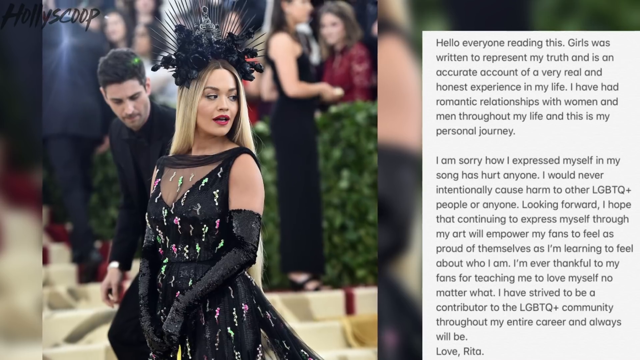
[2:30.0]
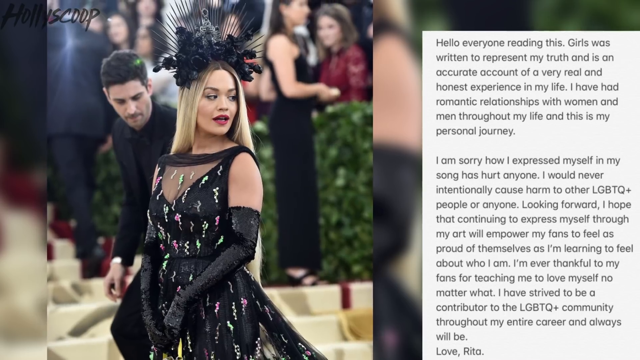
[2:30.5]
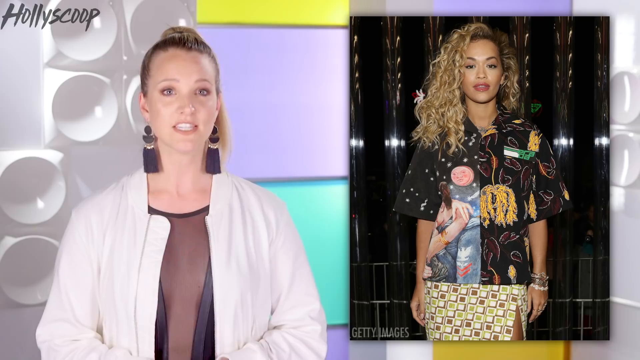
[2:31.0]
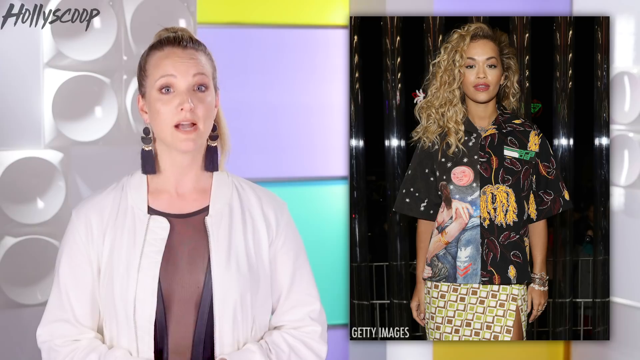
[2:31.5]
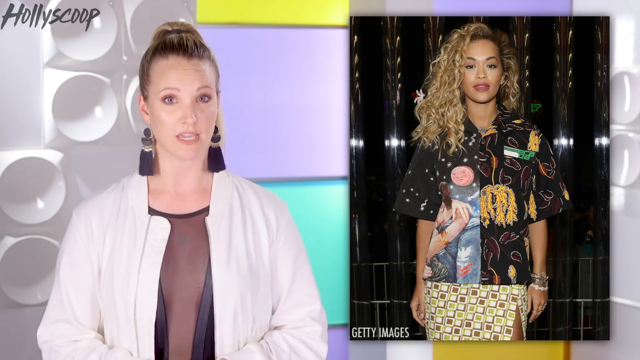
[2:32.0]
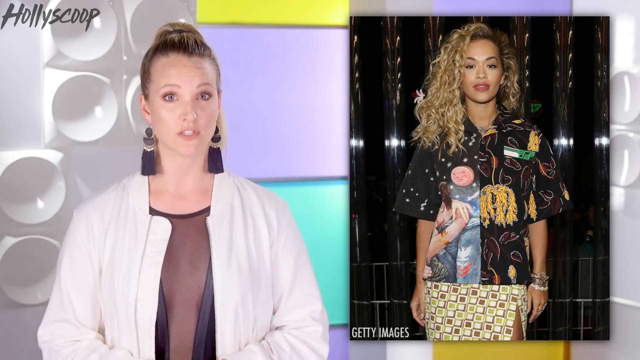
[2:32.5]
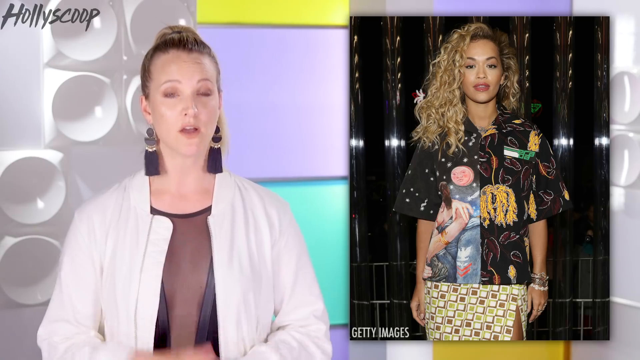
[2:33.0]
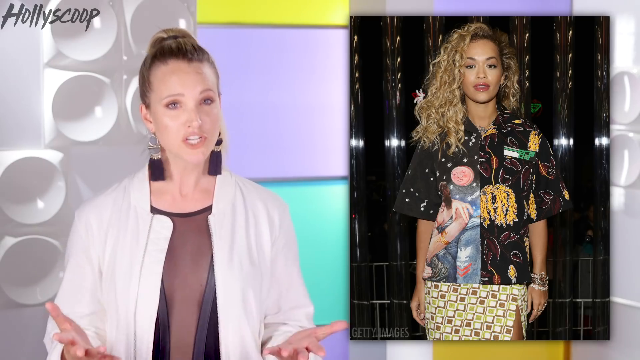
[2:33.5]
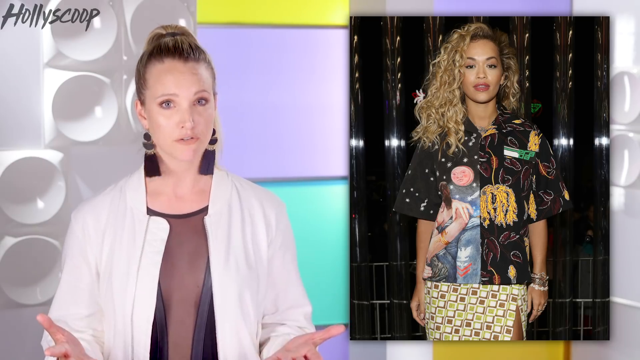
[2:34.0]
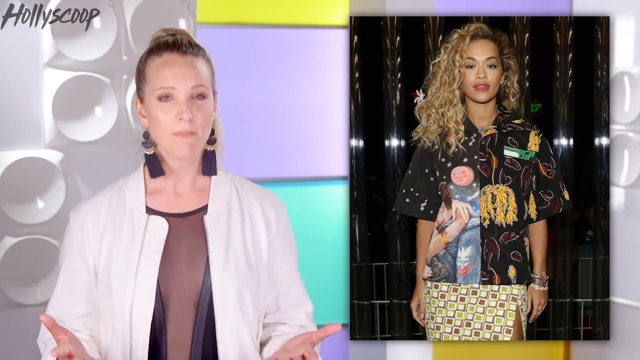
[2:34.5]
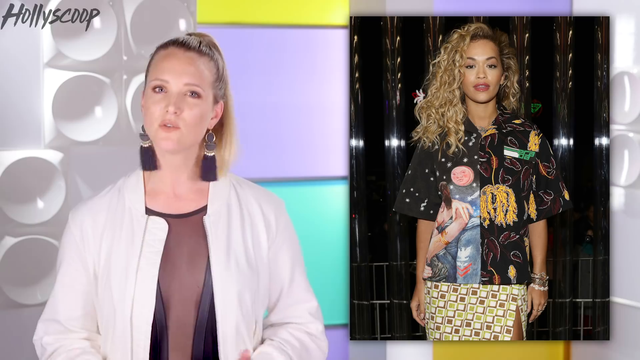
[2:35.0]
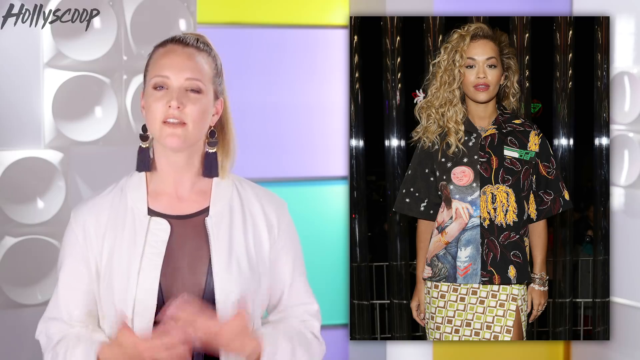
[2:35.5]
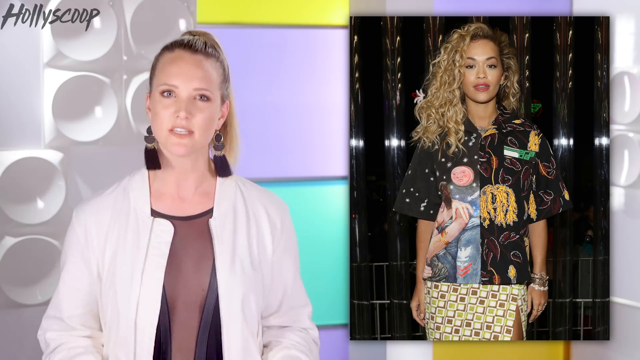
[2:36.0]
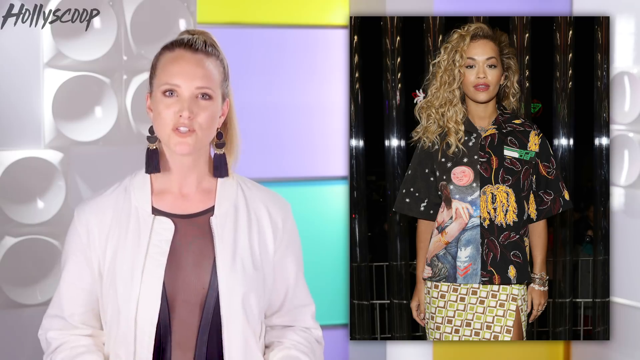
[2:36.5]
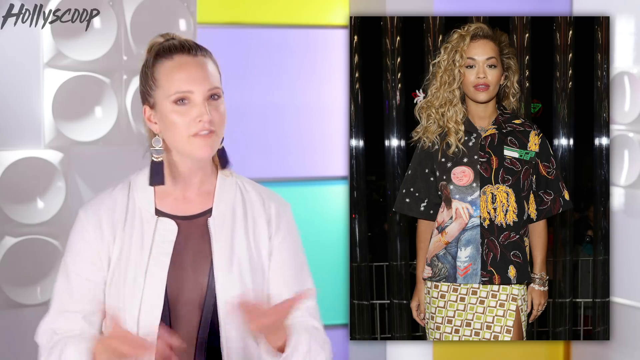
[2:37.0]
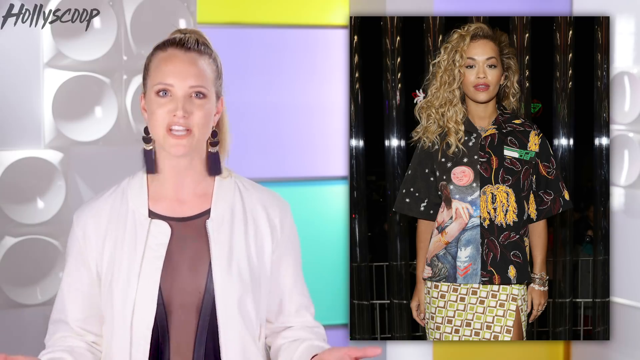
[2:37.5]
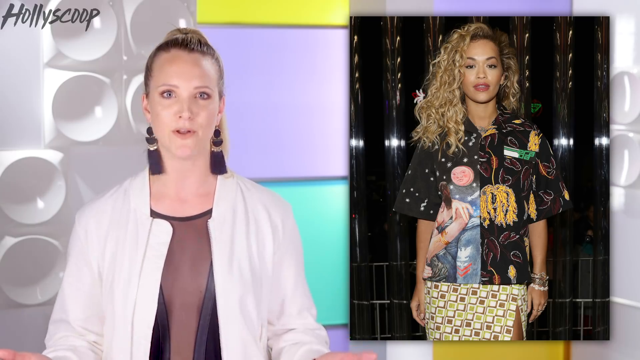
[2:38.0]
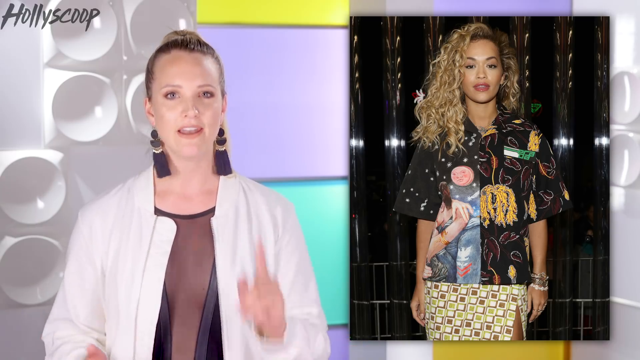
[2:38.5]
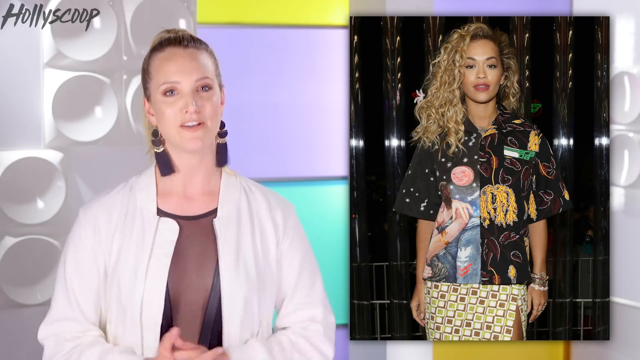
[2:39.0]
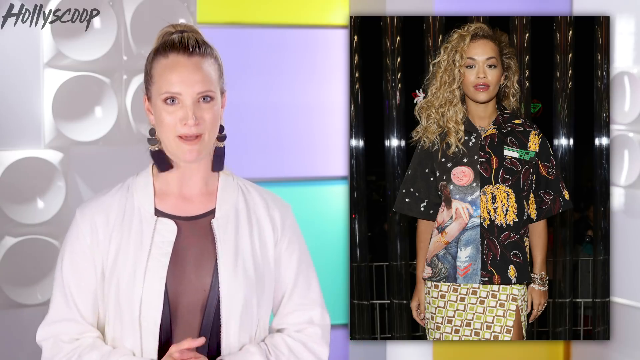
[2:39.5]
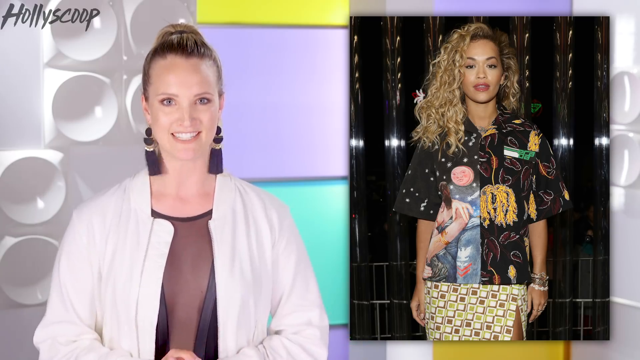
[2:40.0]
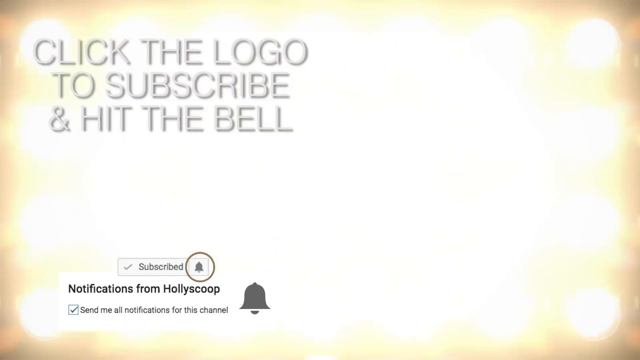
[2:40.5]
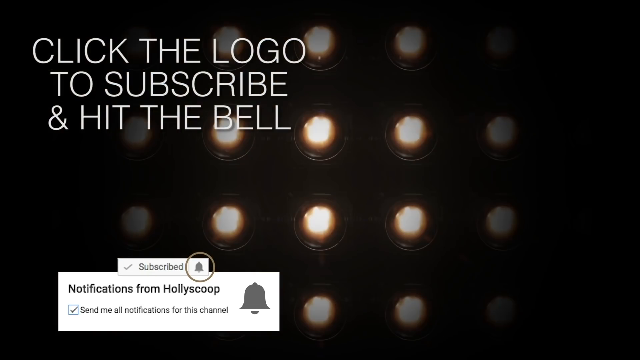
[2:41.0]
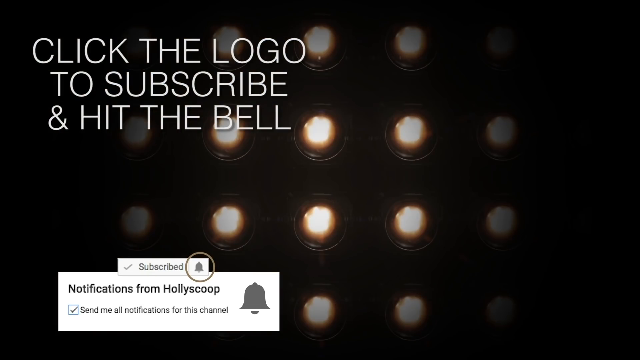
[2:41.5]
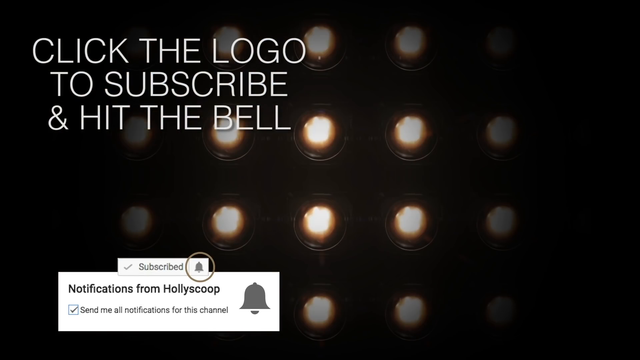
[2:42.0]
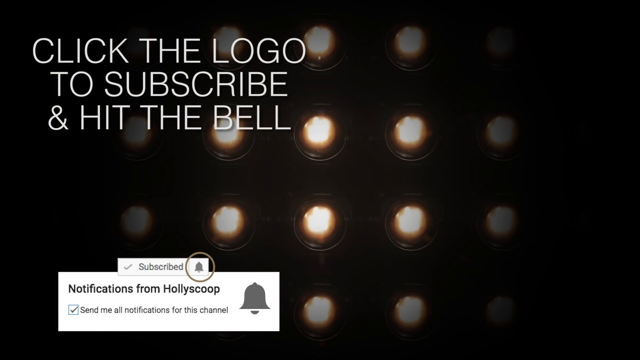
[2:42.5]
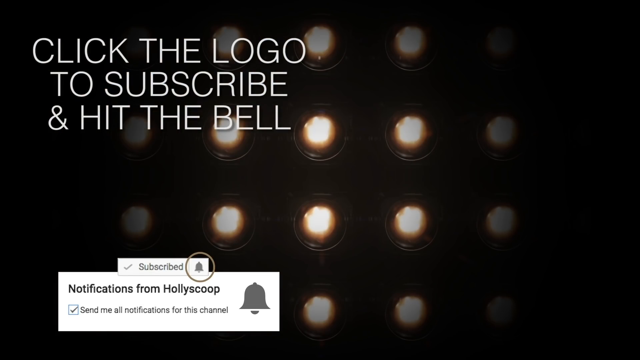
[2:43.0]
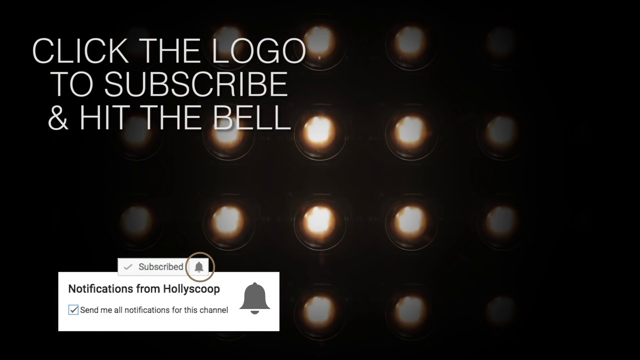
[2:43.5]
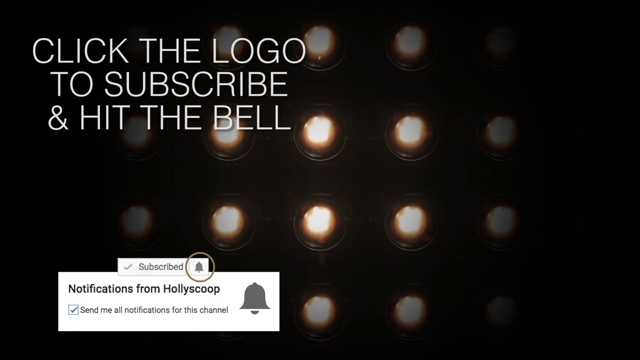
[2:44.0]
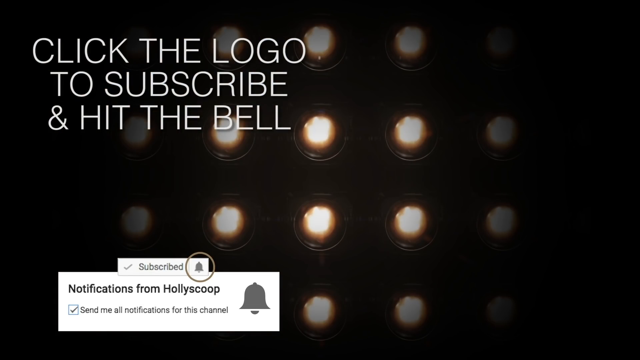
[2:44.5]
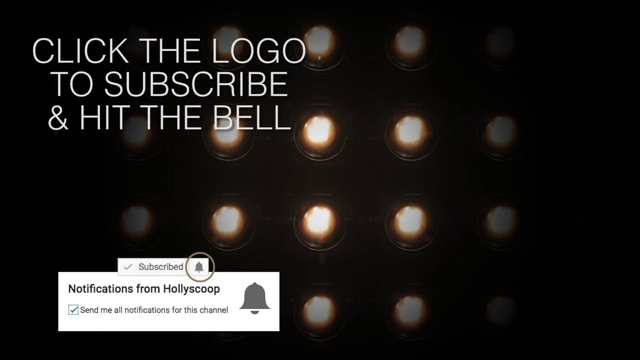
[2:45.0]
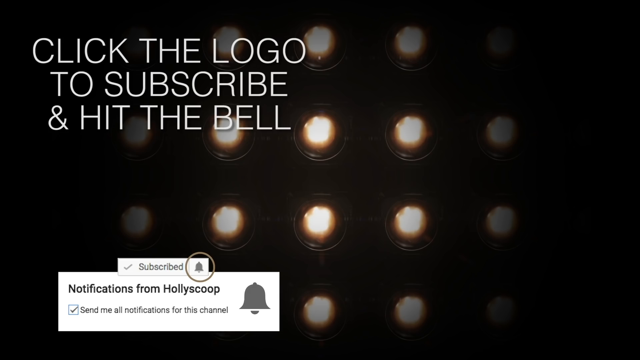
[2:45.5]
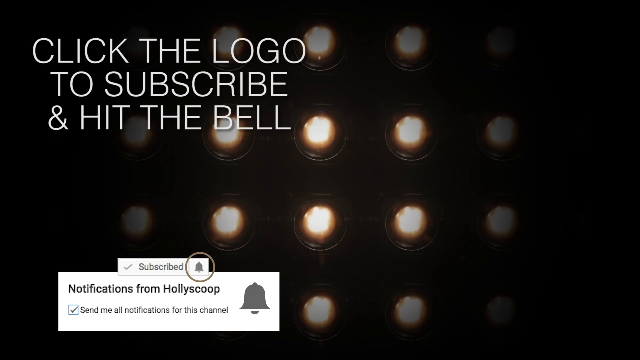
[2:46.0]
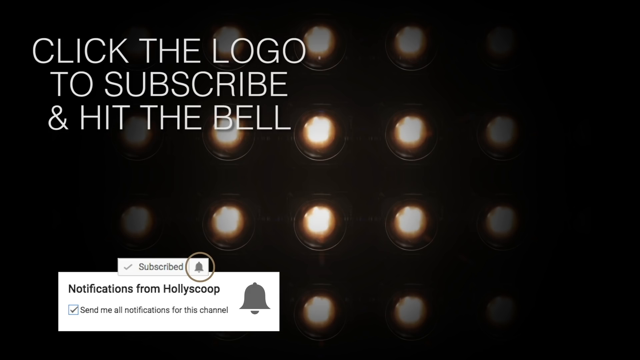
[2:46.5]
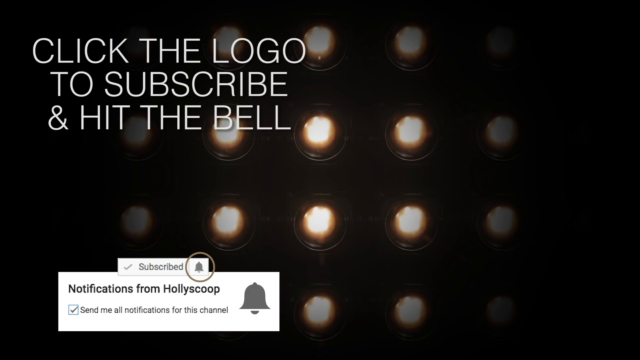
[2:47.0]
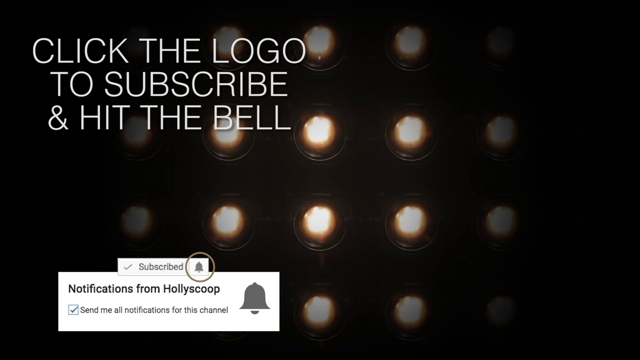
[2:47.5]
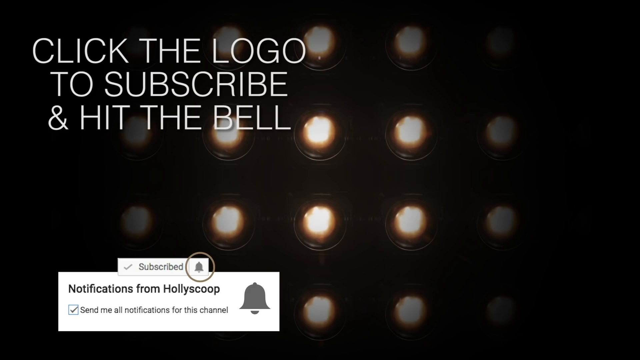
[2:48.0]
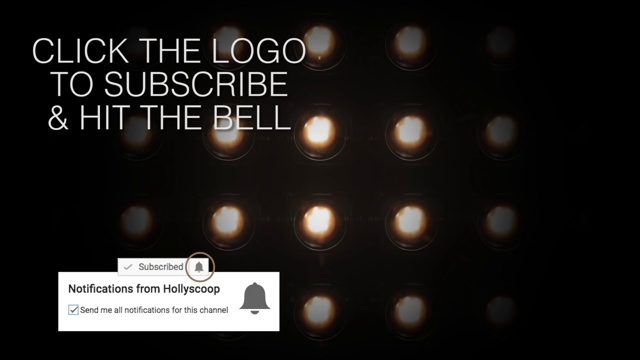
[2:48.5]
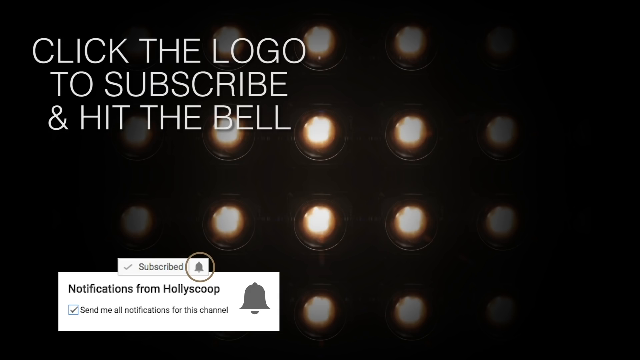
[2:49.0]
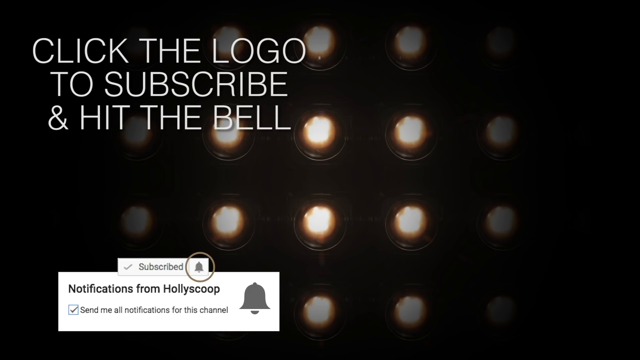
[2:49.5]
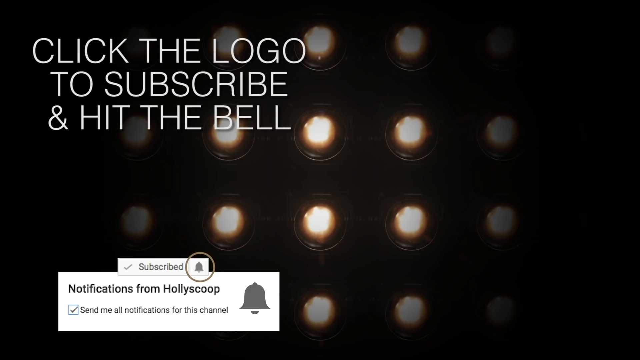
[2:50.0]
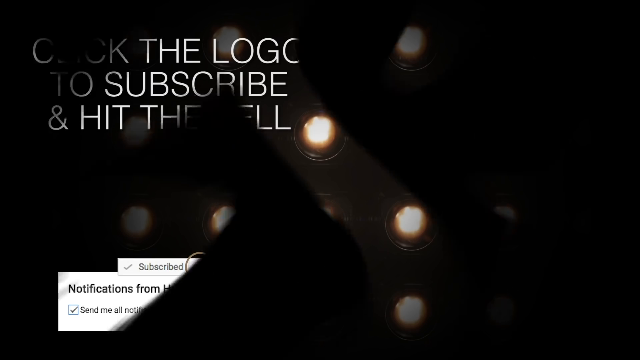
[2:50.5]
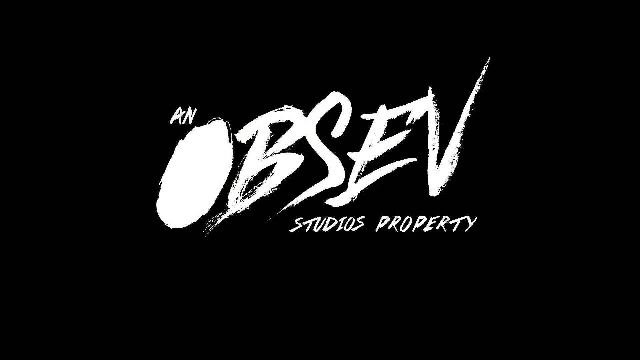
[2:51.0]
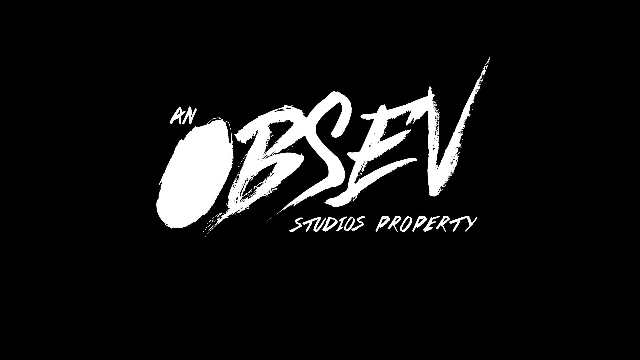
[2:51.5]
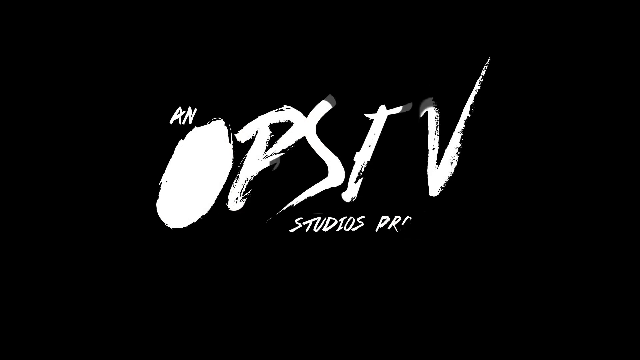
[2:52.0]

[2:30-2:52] Rita Ora's Grammy look is still shown, with her statement on the right. The video cuts back to the host, who gestures dramatically with her hands and head and seems to make a final point, pointing with her index finger. The show transitions to an ending with a more muted background of spotlights and white text at the top saying "Click the logo to subscribe and hit the bell". At the bottom left is an image of the subscribe button showing subscribed, with a circle around the bell, and another zoom in shows notifications from Hollywood Scoop: "Send me all notifications for this channel." It then cuts to a graphic saying "an OBSEV studios property" with some highly stylized text.